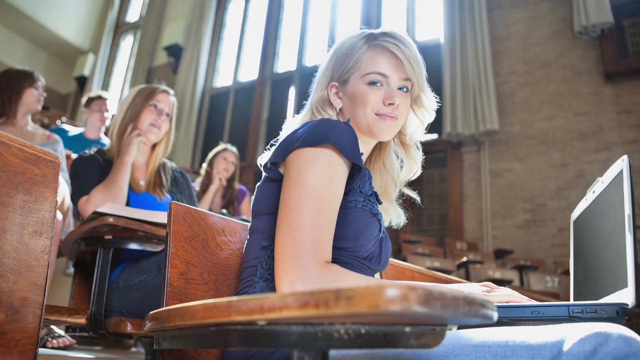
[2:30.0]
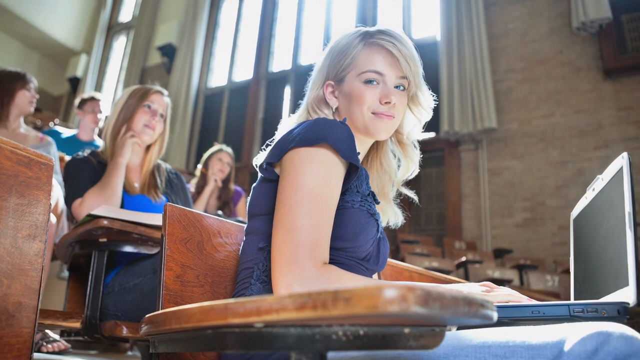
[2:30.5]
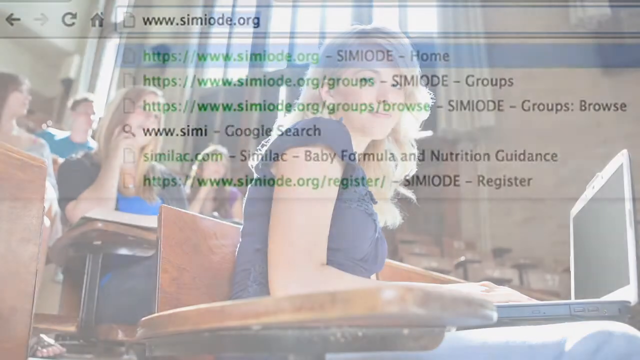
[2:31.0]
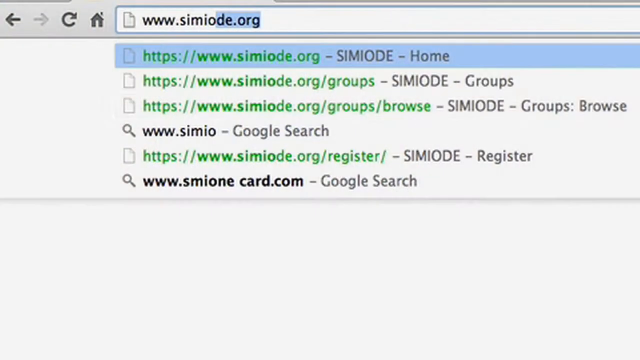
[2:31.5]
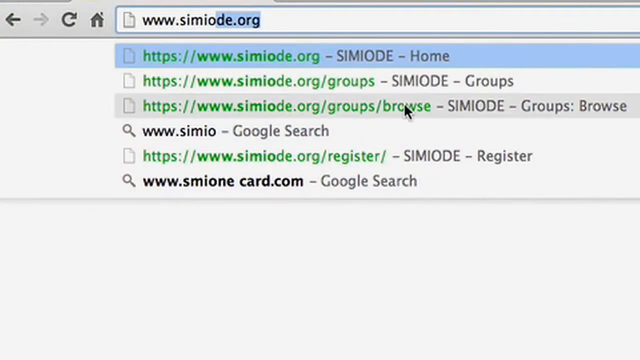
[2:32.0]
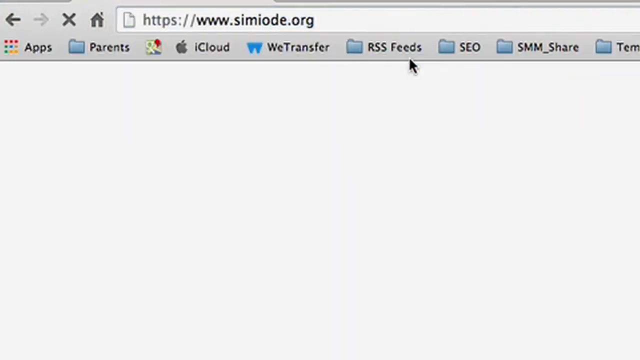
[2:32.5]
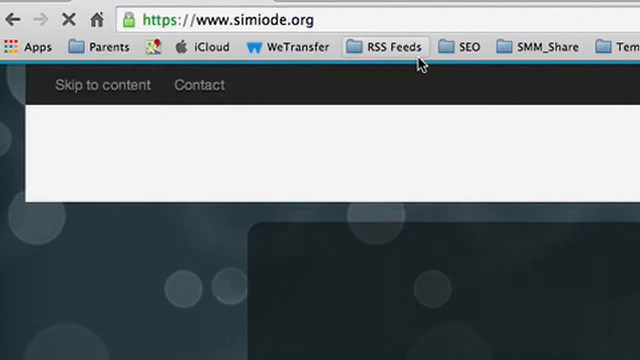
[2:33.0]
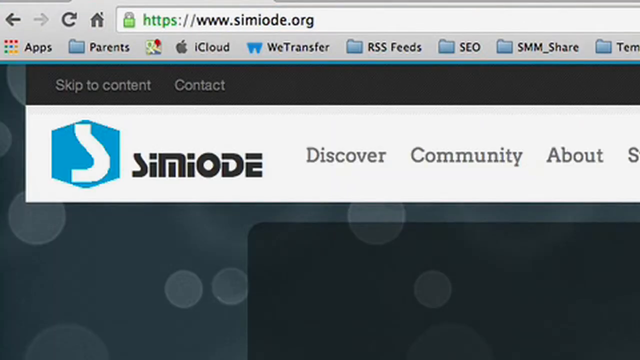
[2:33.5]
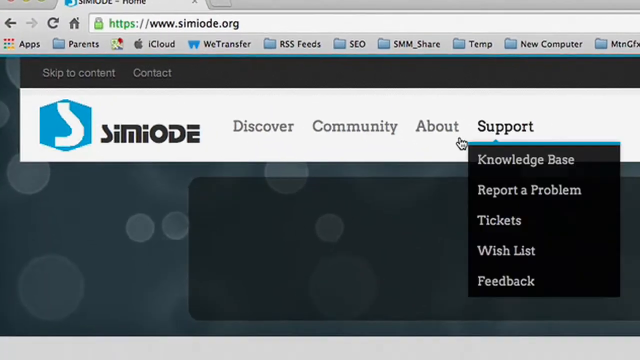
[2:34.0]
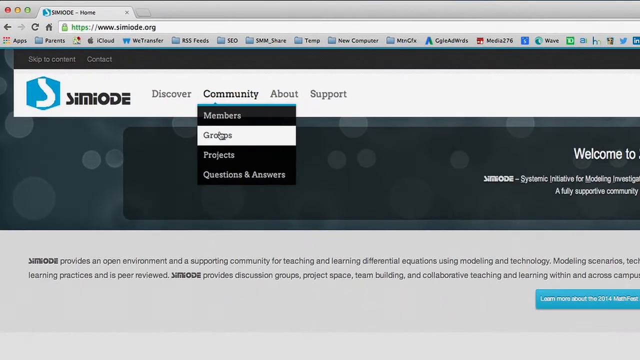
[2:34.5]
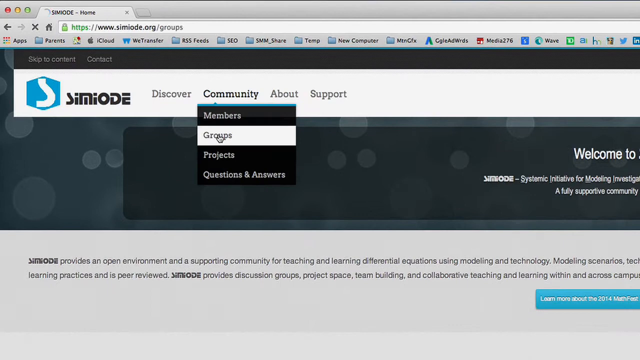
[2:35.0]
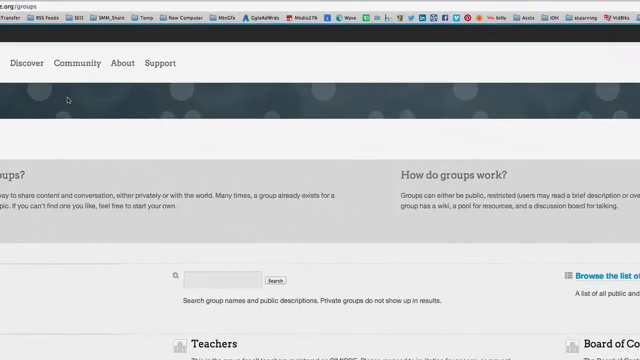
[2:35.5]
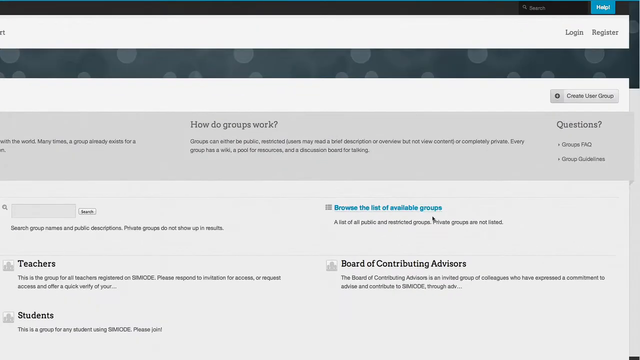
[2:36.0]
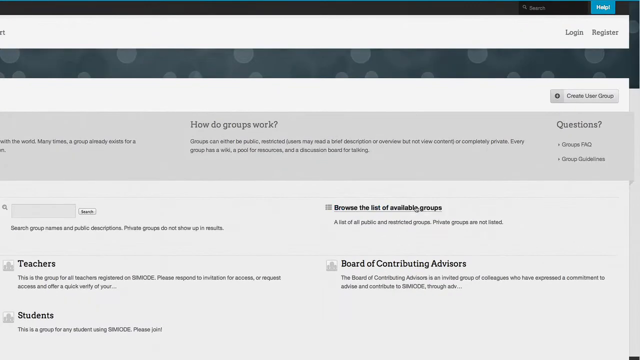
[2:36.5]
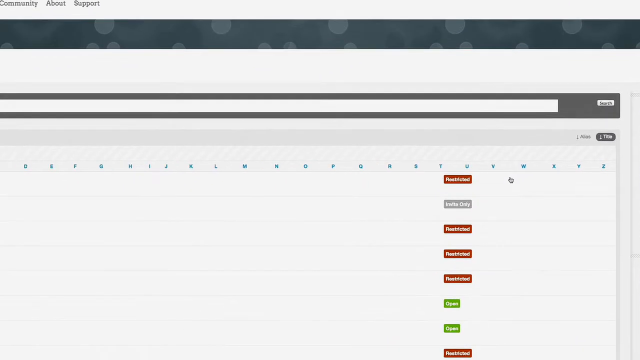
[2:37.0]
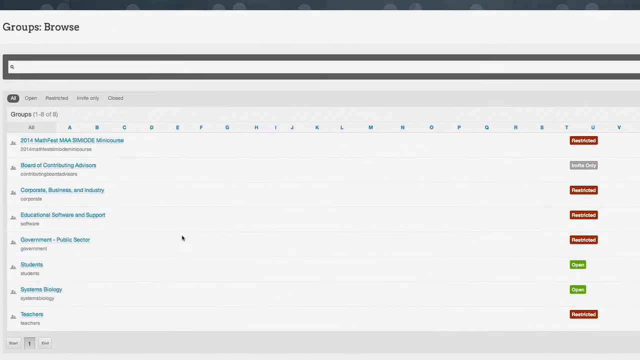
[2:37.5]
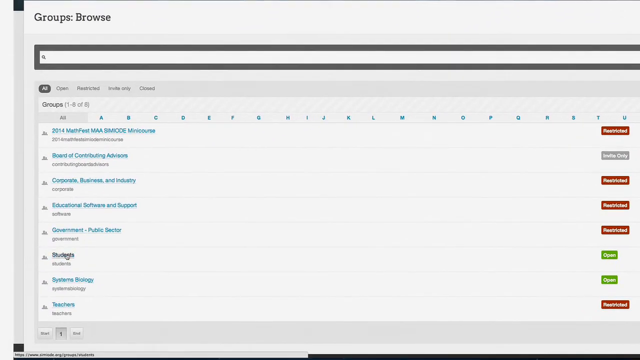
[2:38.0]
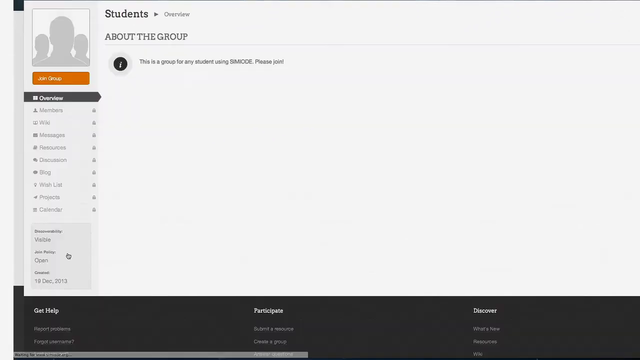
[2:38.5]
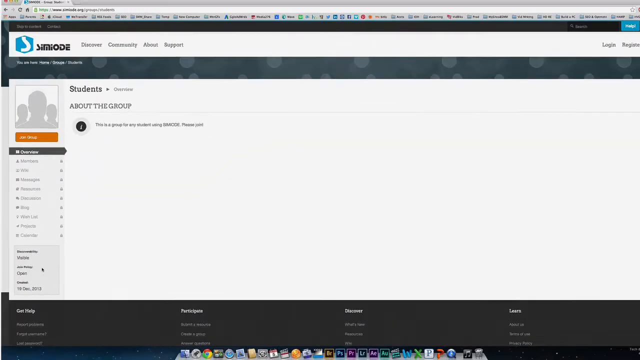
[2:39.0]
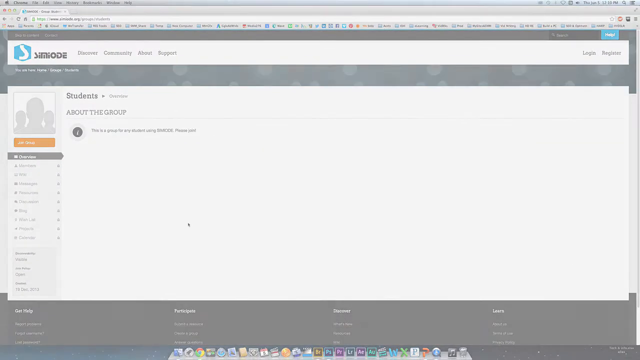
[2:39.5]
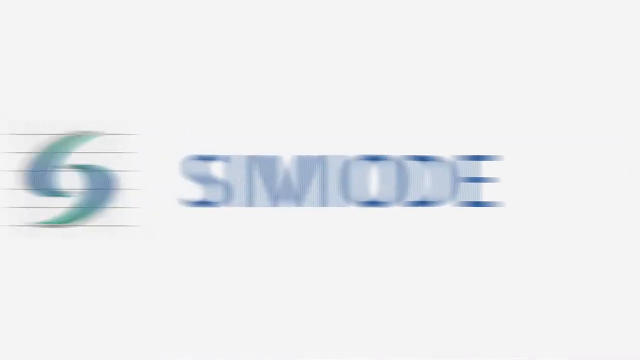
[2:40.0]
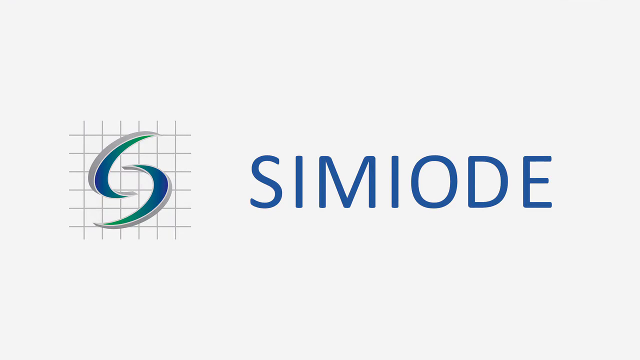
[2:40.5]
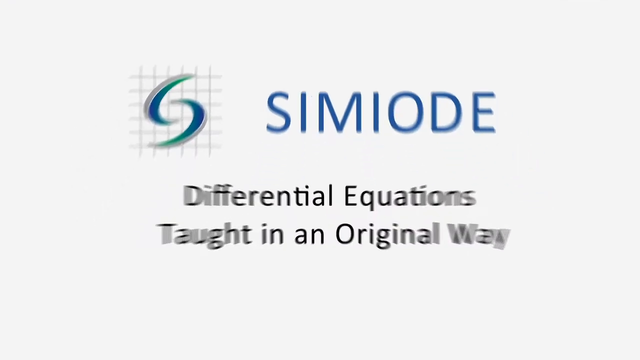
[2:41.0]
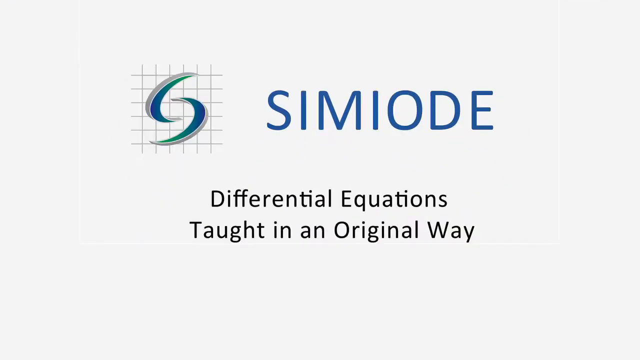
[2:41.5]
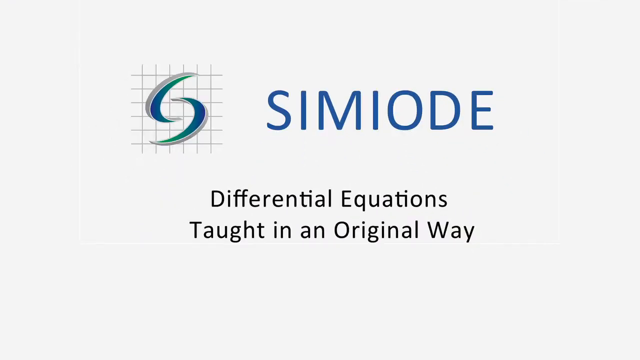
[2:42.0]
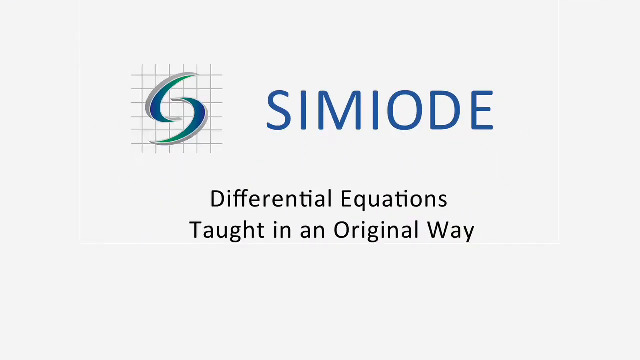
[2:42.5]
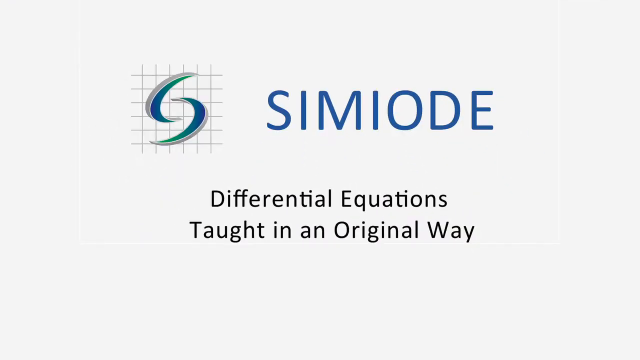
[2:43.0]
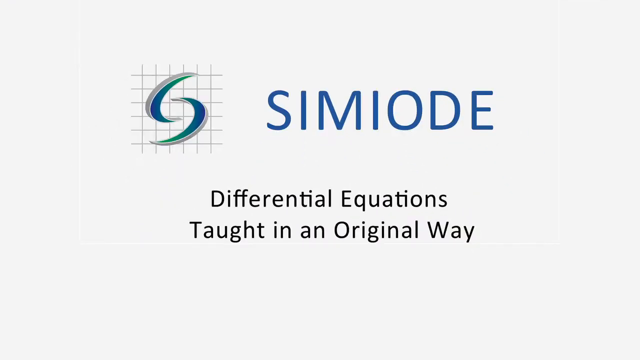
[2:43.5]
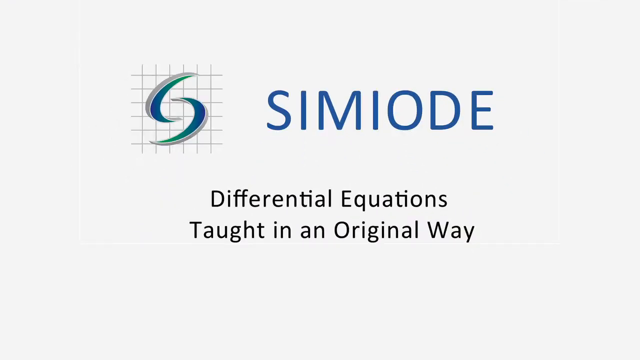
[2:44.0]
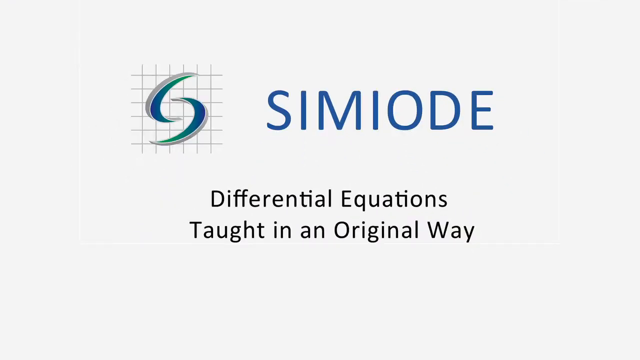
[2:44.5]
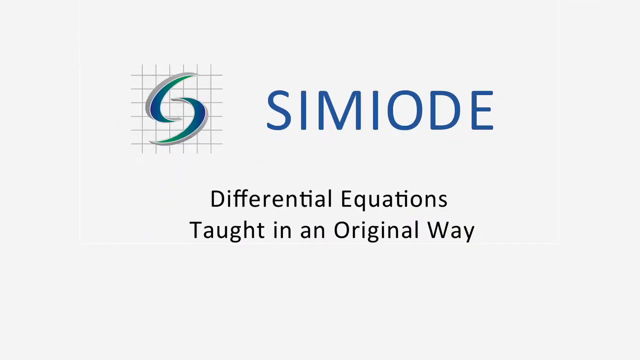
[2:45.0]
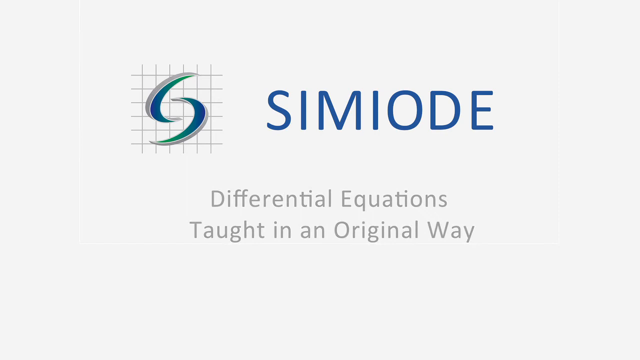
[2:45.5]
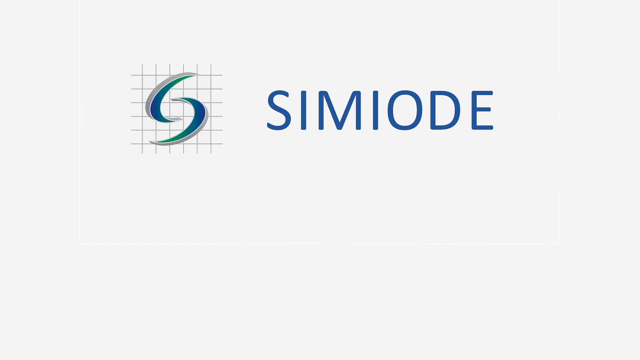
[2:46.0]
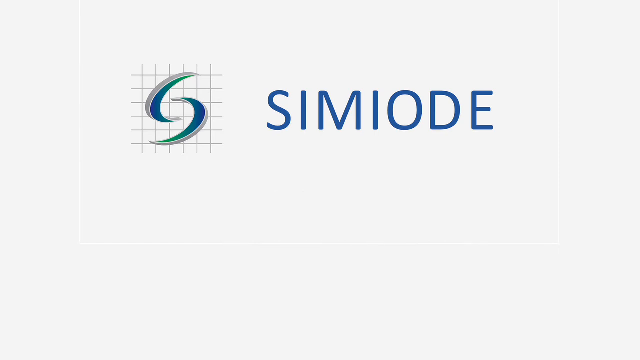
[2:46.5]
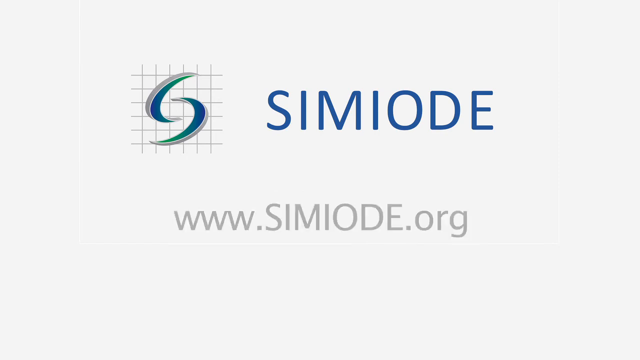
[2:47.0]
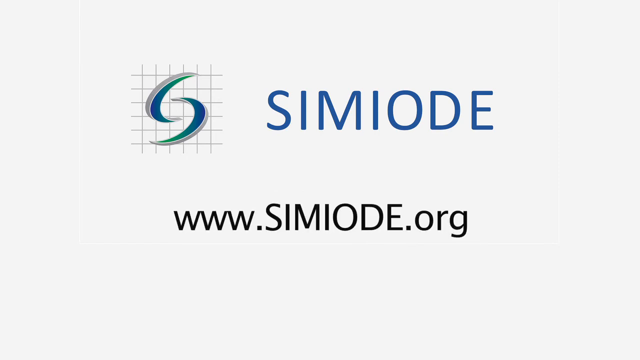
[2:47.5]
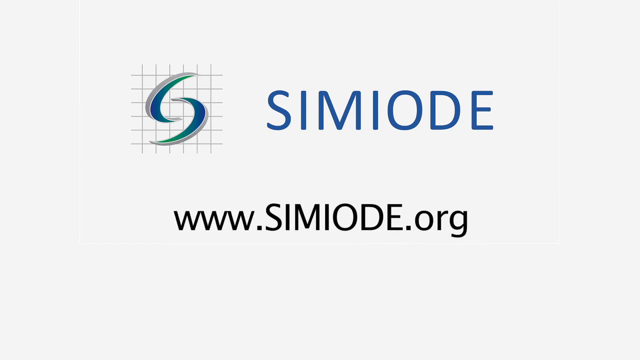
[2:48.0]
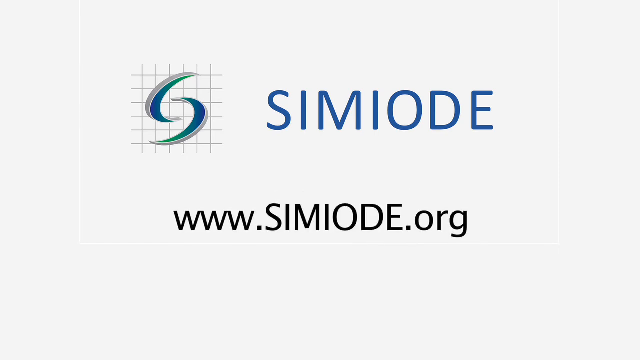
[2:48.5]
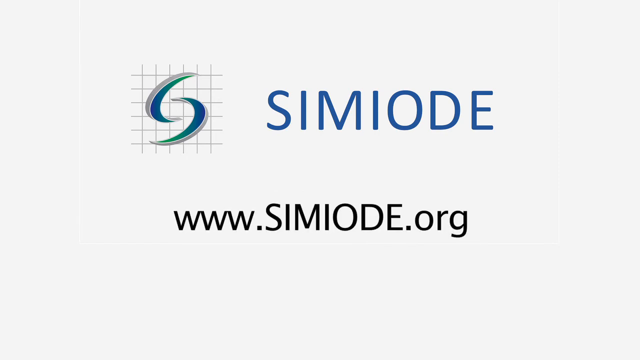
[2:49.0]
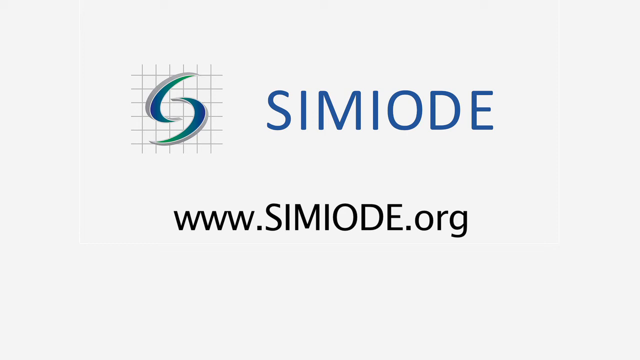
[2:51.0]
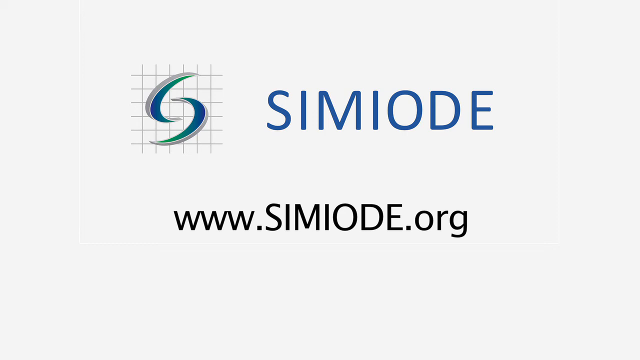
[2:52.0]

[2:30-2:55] The girl sits in a brown-backed chair, with what looks like an arm of the chair in the foreground. She looks over her right shoulder toward the camera, smiling slightly. Her long blonde hair is lit from behind as if engulfed in light, and light also highlights it over her left shoulder and at the front. In front of her is what looks like a blank computer screen with the lid lifted, and in the background, between her and the screen, empty seats of the auditorium extend past her into the near distance. Behind her are four other students. Next, a screen shows "simiode.org" in the address bar; a drop-down menu shows "groups", leading to a set of available groups, including "government", "public sector", "students", "systems biology" and "teachers". "students" is selected, and below it there is some information about the group.